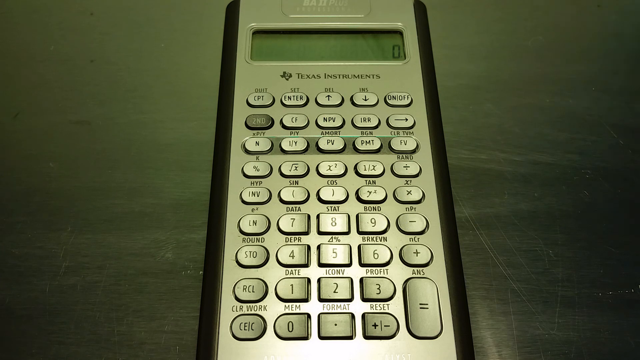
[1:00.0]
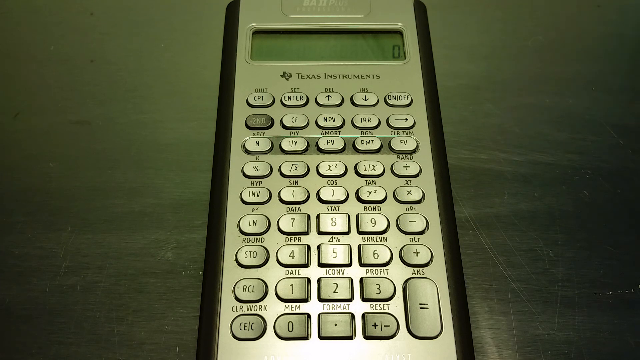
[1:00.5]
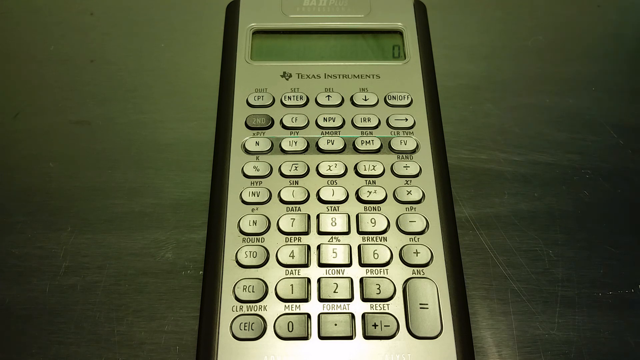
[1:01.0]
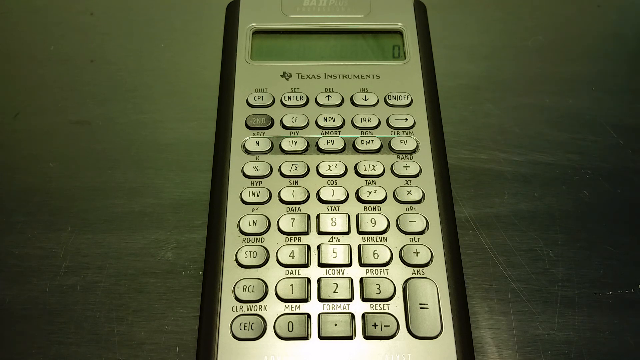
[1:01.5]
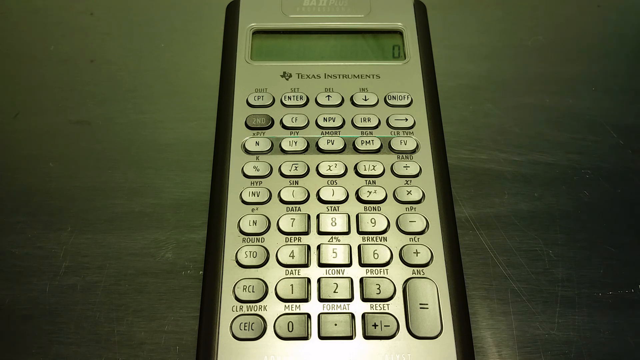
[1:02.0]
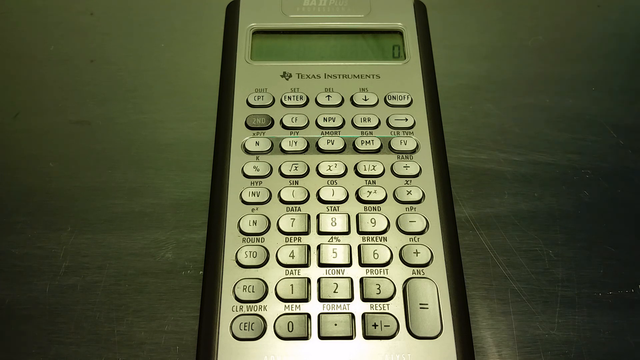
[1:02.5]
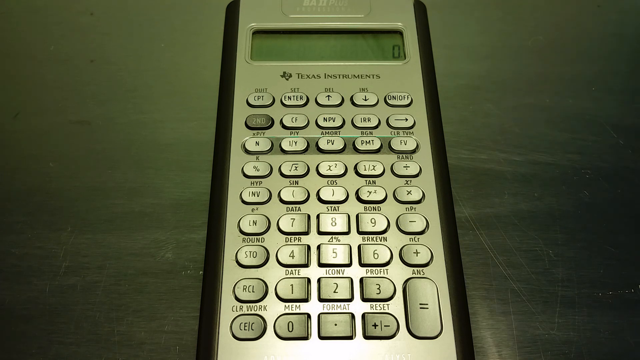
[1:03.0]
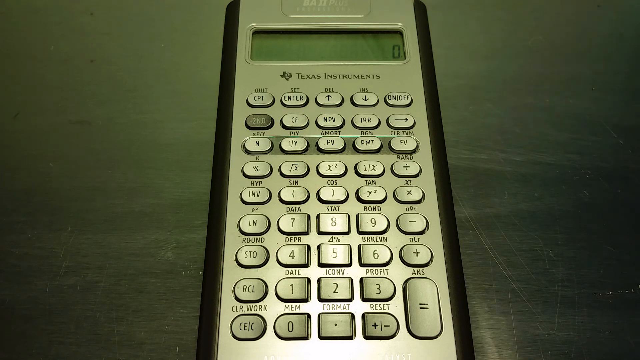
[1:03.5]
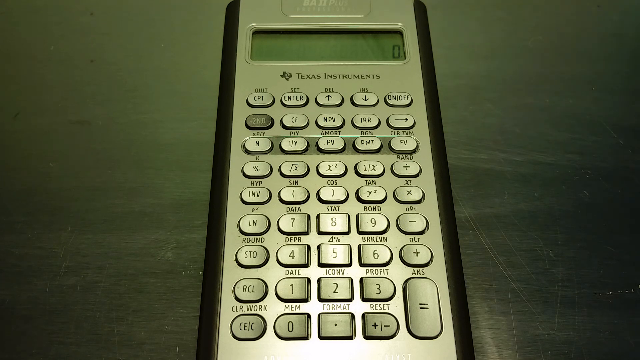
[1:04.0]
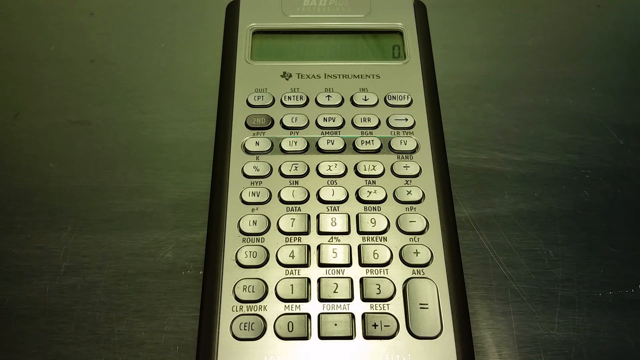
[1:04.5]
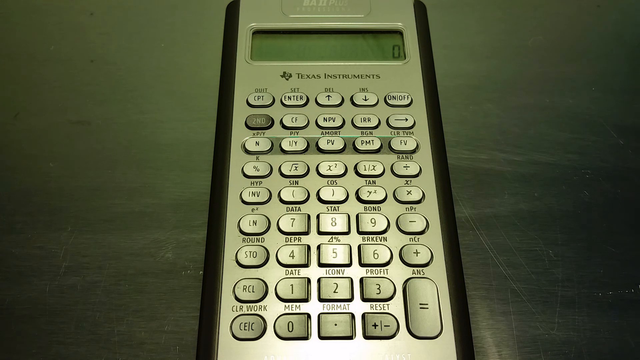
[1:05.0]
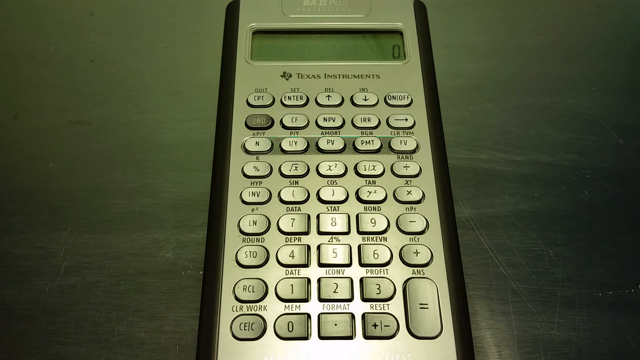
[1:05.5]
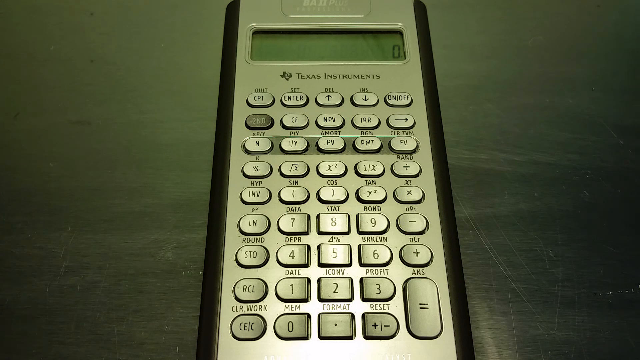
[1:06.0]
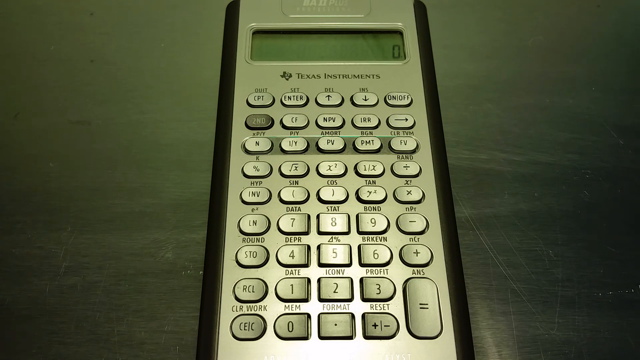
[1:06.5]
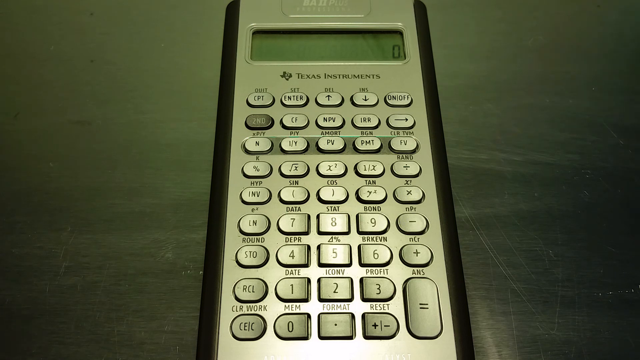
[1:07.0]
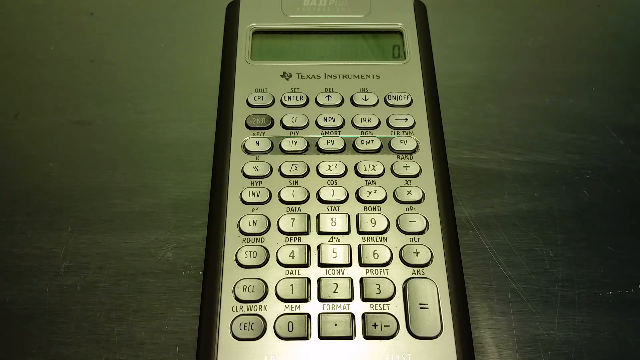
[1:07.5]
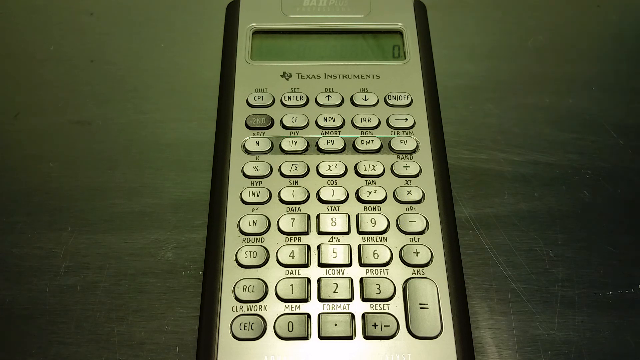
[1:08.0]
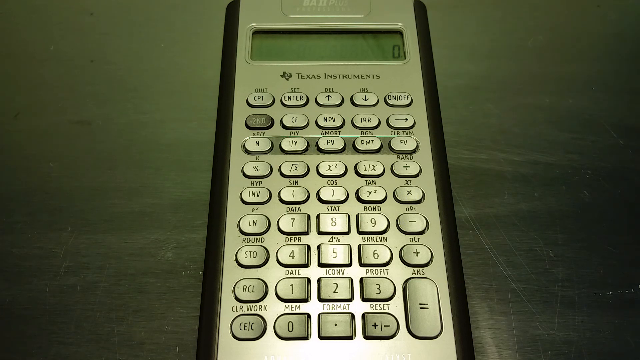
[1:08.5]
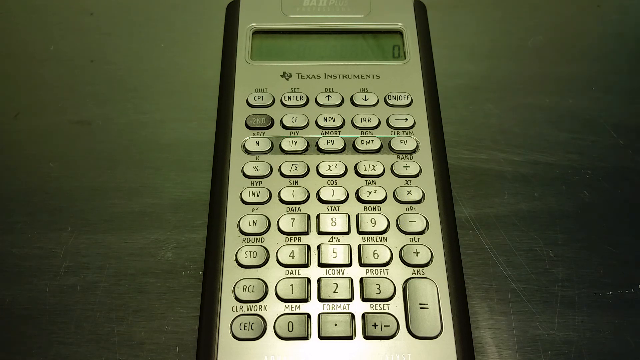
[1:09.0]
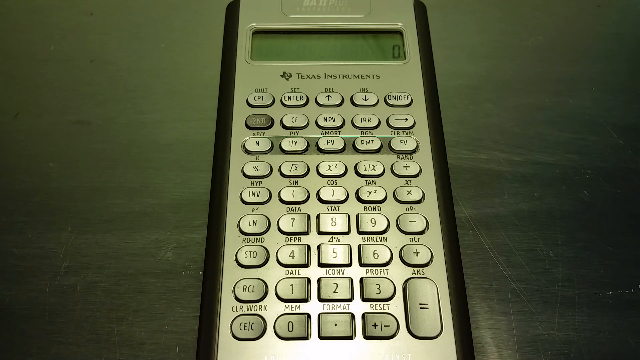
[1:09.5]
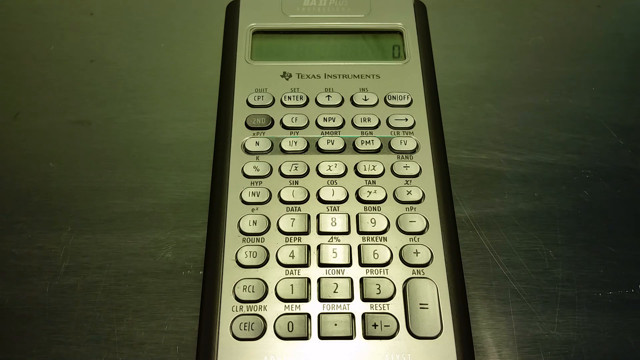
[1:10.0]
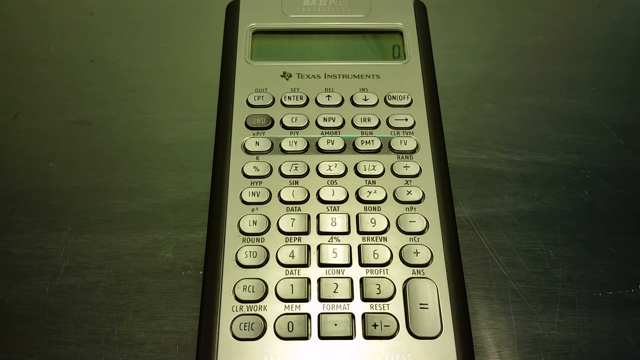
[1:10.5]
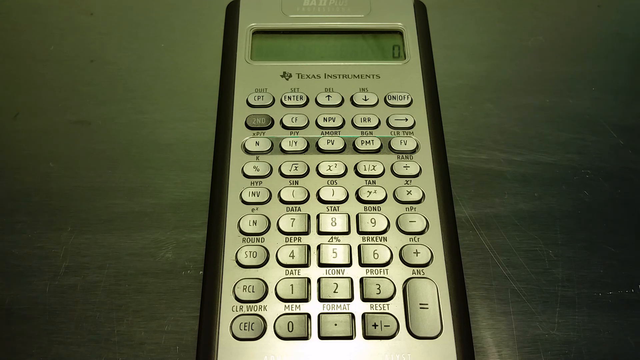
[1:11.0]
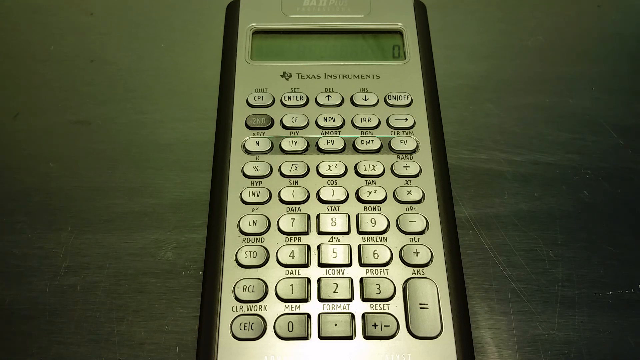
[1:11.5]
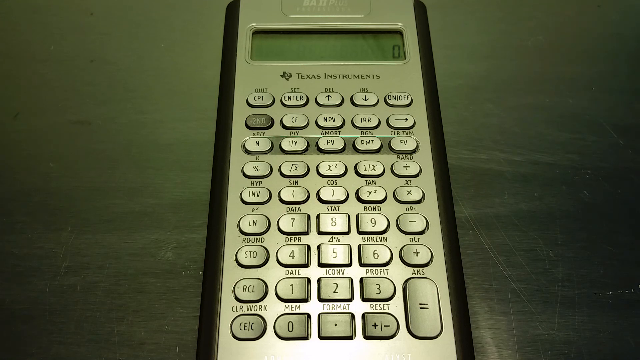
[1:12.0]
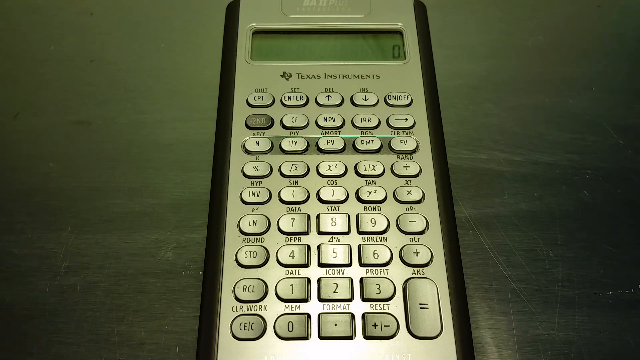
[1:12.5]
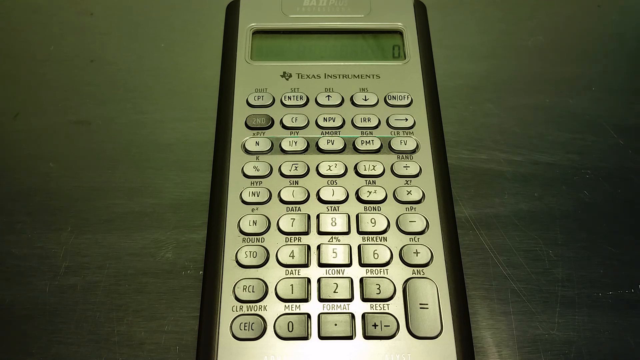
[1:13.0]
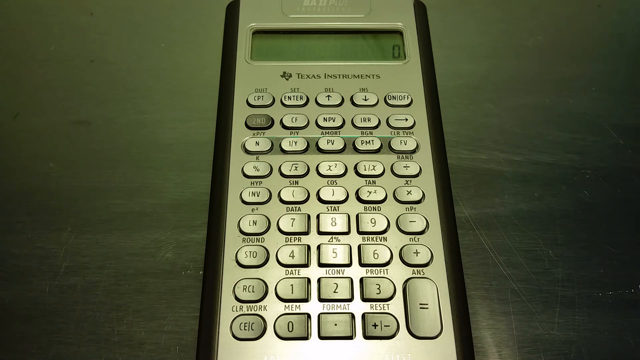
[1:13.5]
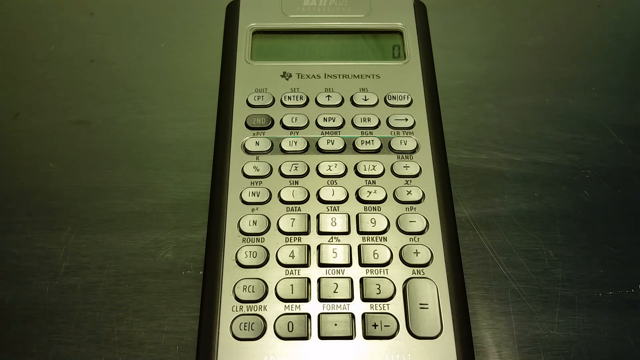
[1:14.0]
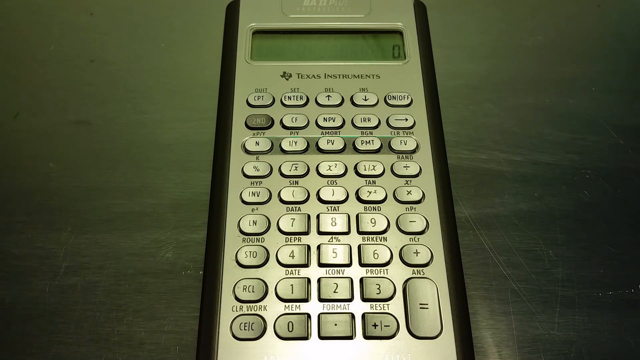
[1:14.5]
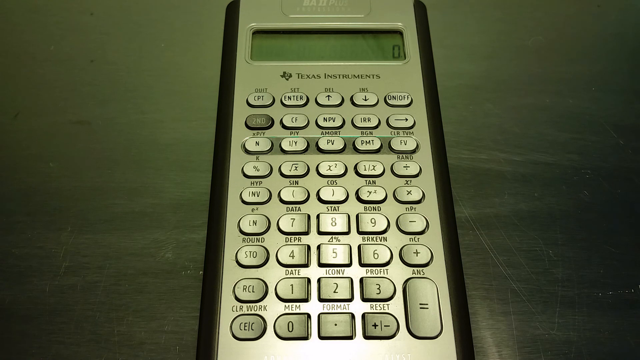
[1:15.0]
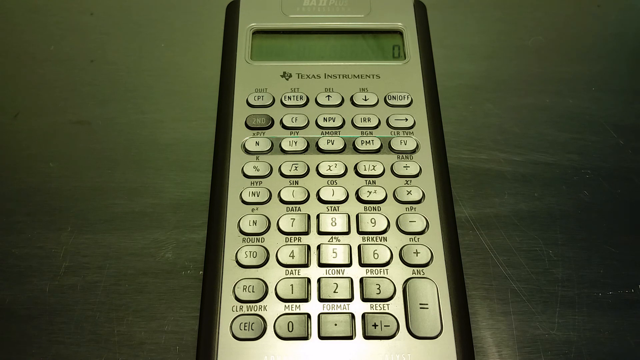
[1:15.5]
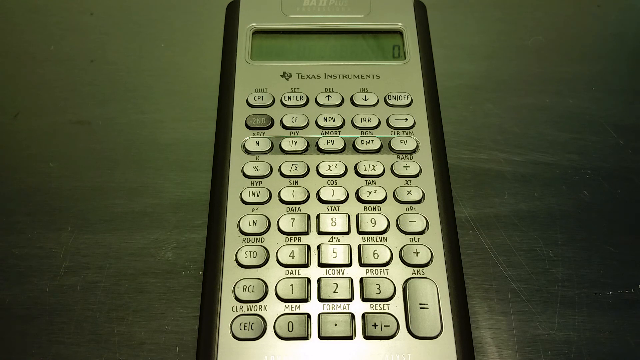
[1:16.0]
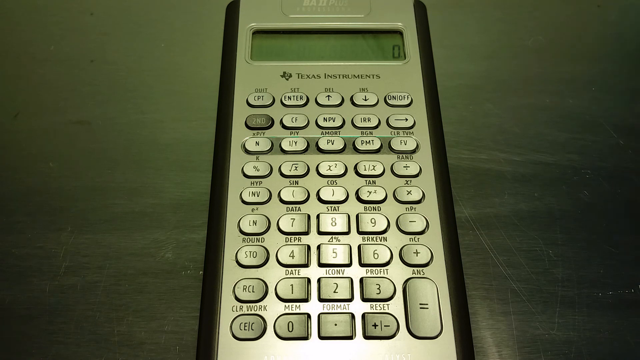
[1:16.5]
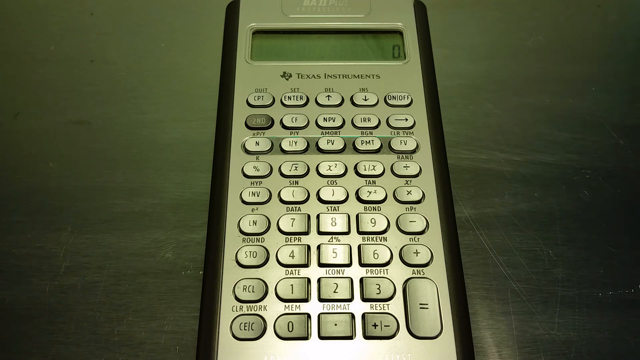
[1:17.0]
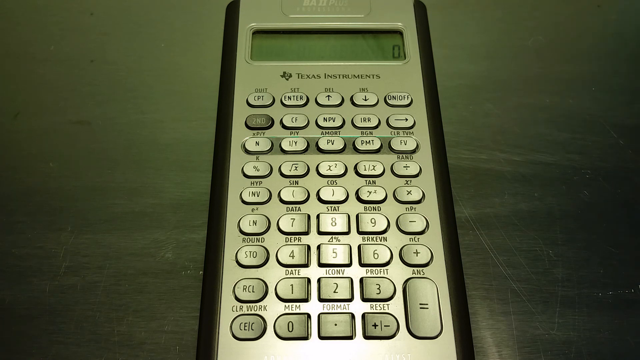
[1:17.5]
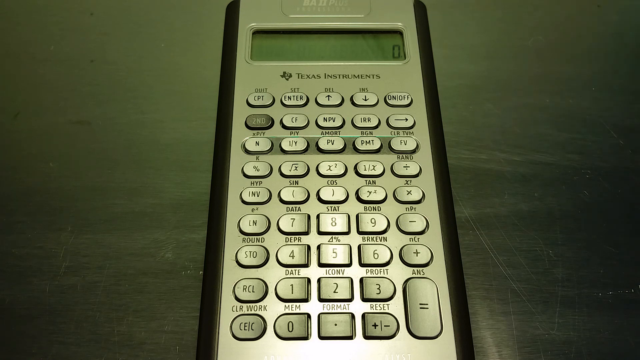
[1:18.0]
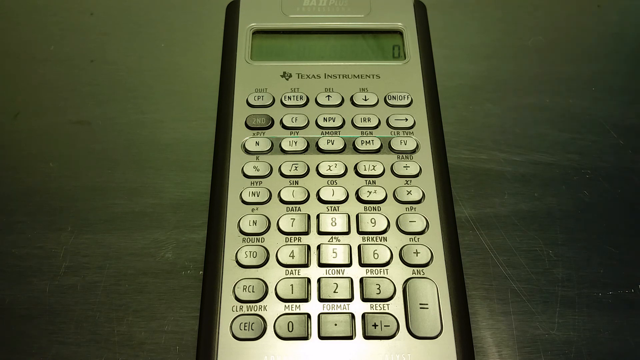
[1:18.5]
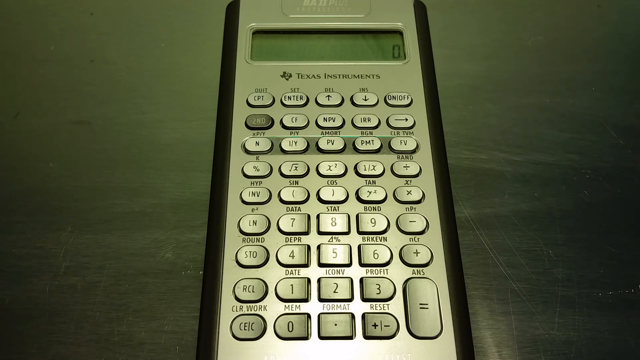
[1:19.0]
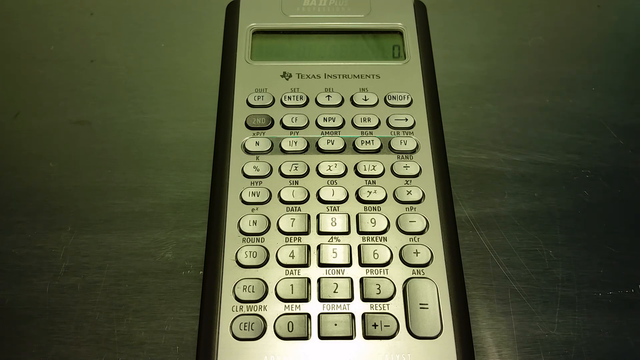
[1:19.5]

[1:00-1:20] The next row begins with an RCL button, followed by the number 1 with "date" on it, then 2 with "ICONV" on top, then profit with the number 3 on the button. The last button on that row is the answer button with "ANS" on top, which covers two rows, the second from last and the last. The bottom row has "CELC" on top of its first button, which apparently says clear work, "CLR". Next to the right is a zero with "MEM" on top, then format with a period on top, in the middle, and the last one on that row is a reset button with a plus and a minus sign on it.